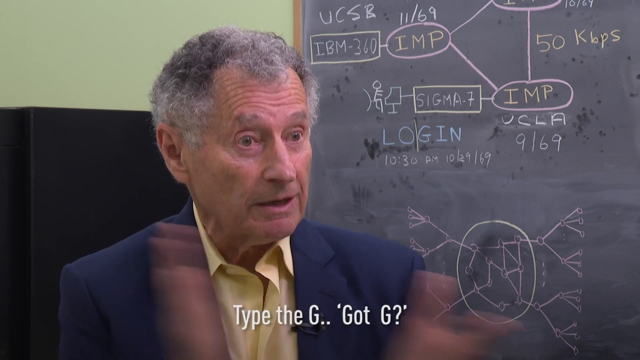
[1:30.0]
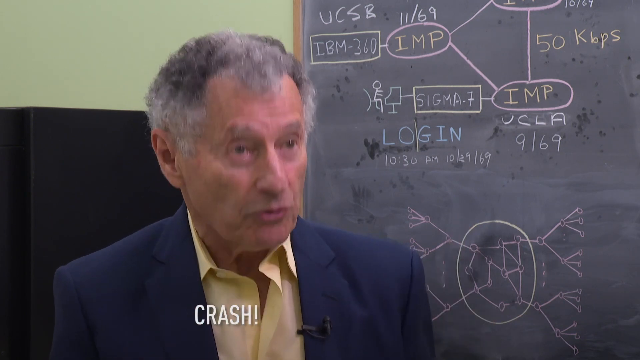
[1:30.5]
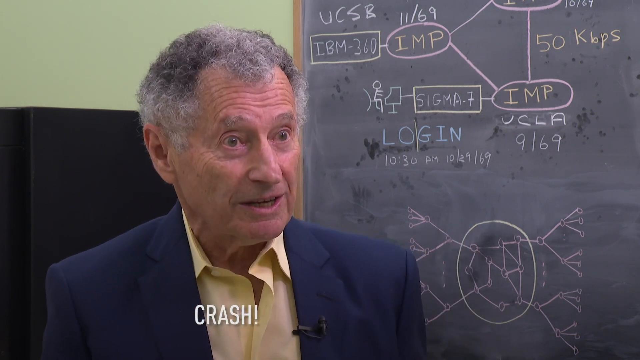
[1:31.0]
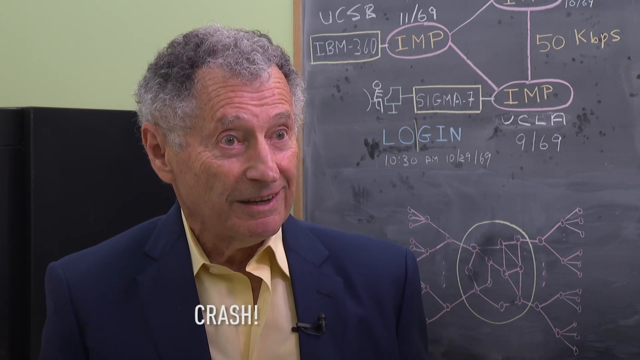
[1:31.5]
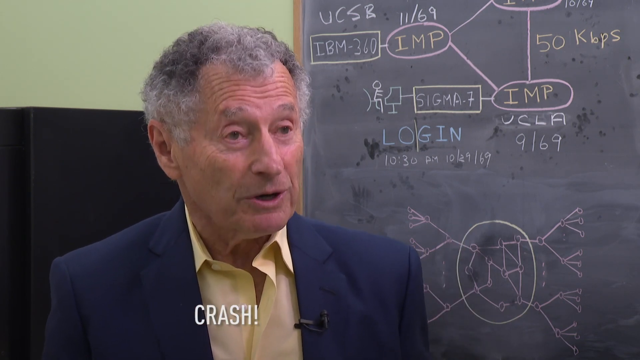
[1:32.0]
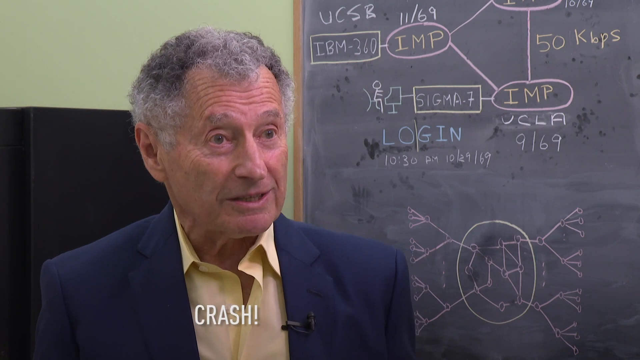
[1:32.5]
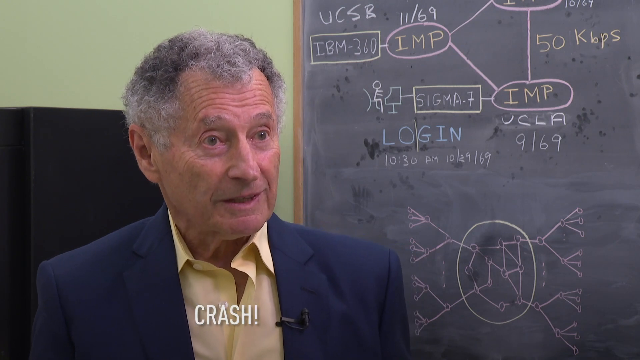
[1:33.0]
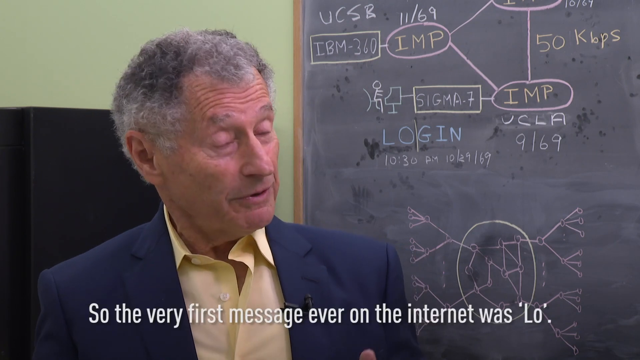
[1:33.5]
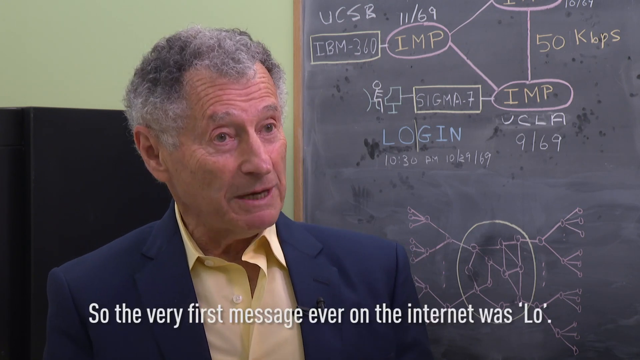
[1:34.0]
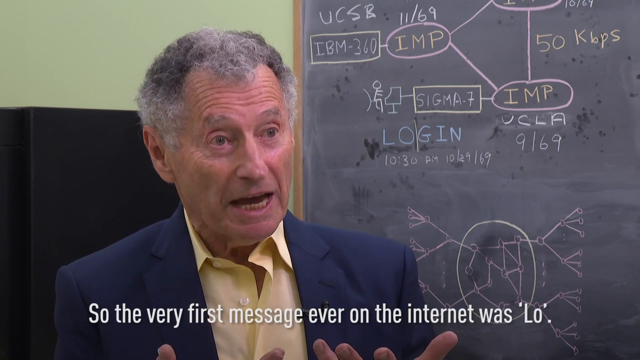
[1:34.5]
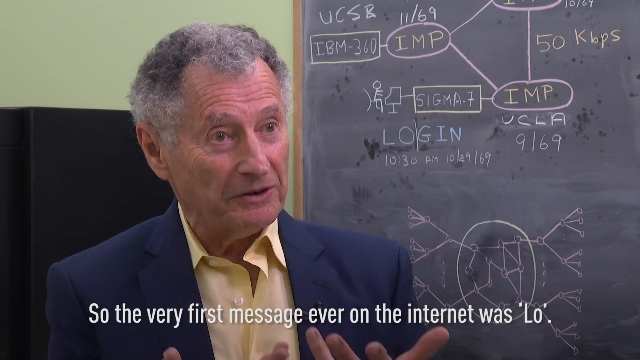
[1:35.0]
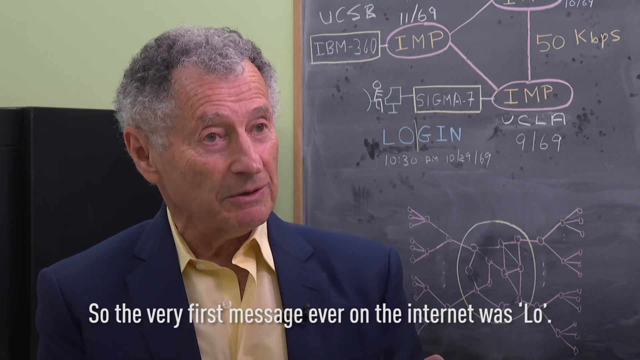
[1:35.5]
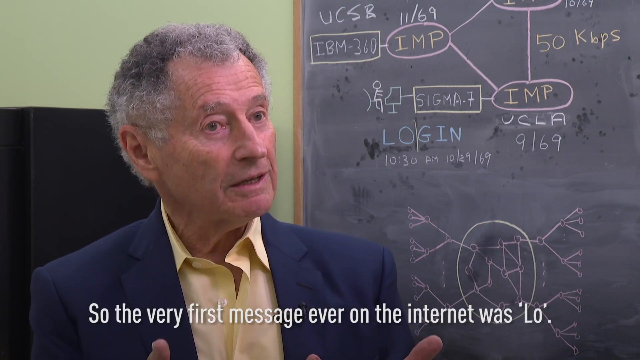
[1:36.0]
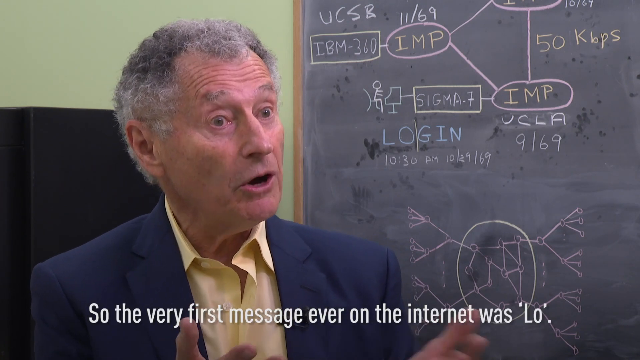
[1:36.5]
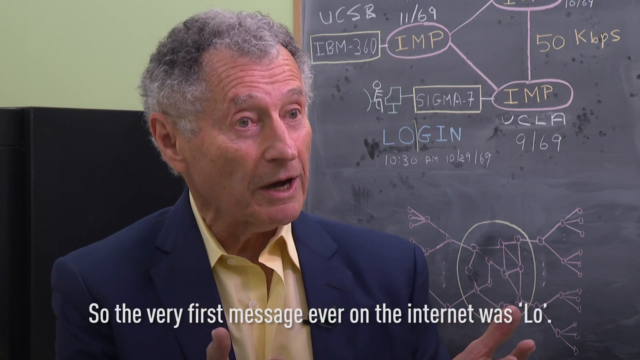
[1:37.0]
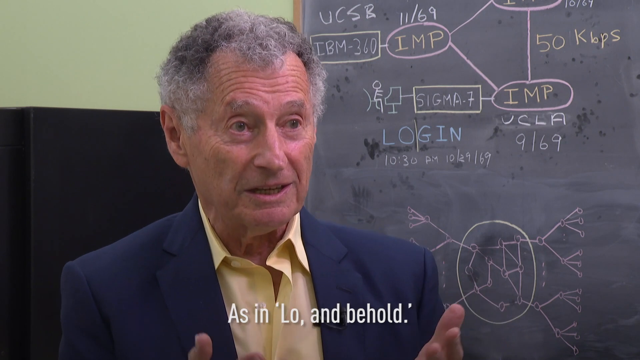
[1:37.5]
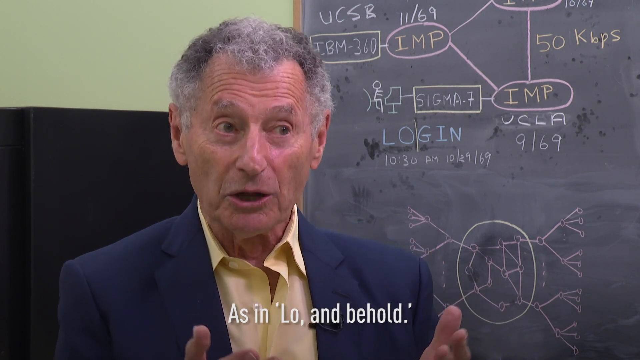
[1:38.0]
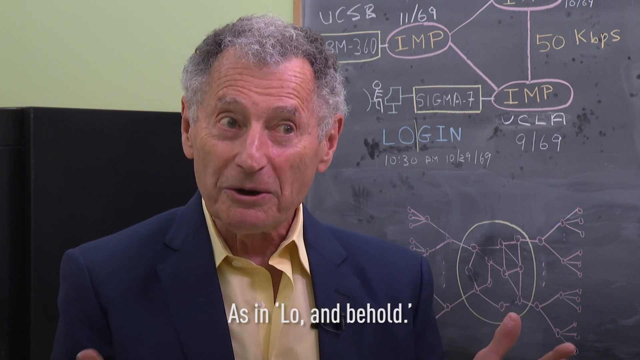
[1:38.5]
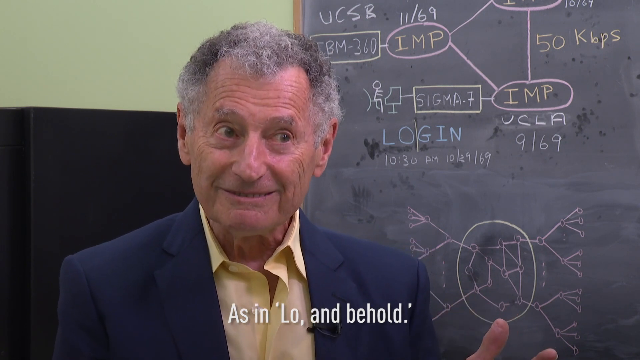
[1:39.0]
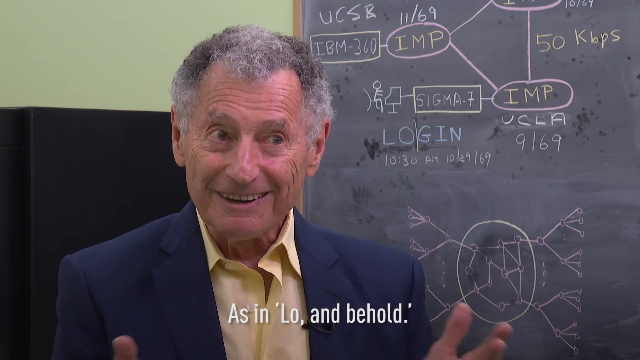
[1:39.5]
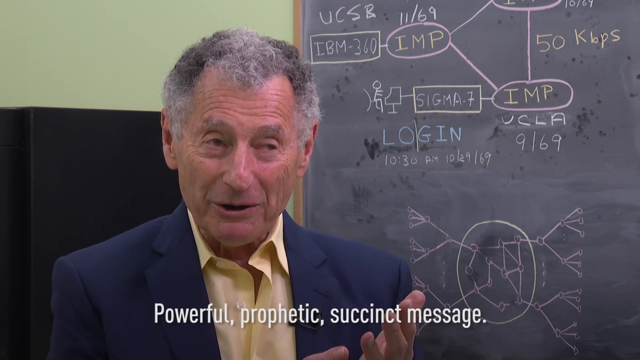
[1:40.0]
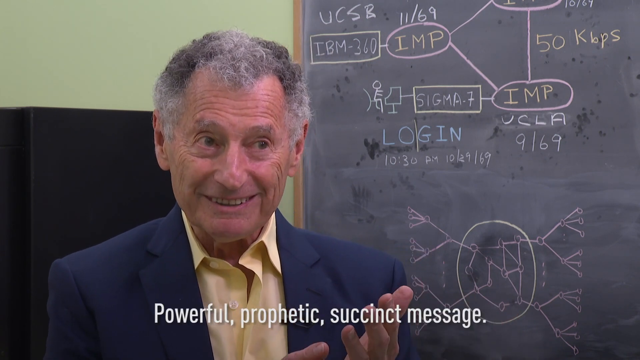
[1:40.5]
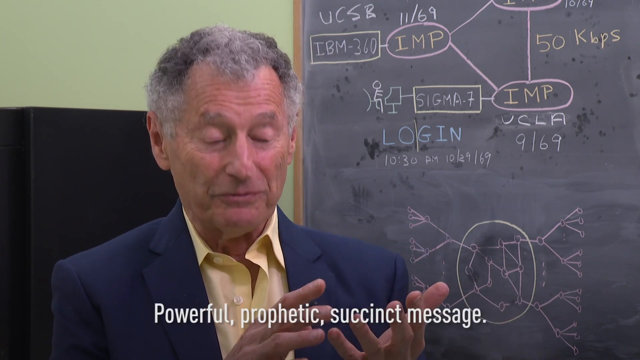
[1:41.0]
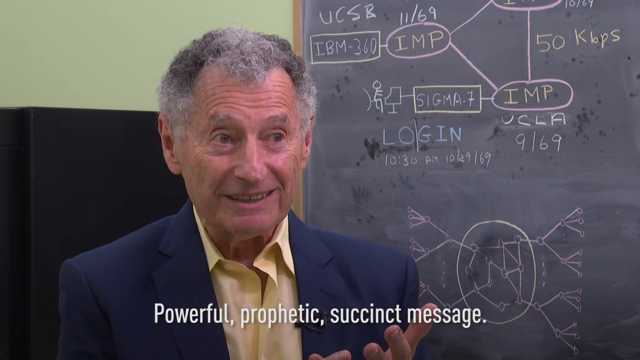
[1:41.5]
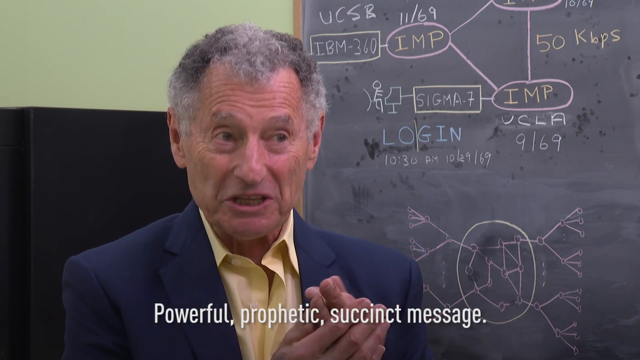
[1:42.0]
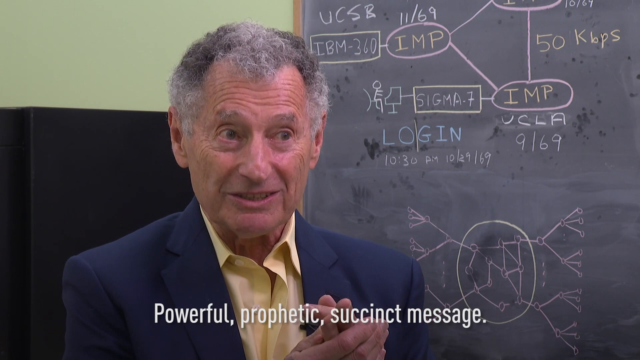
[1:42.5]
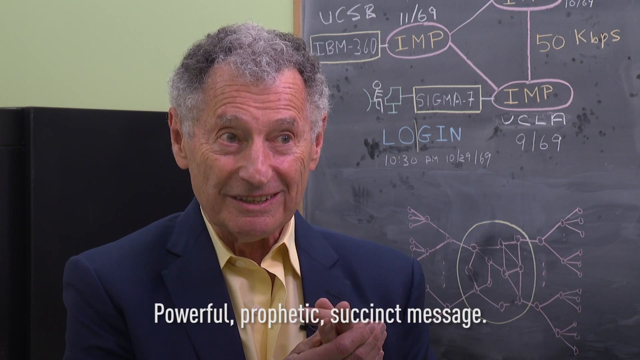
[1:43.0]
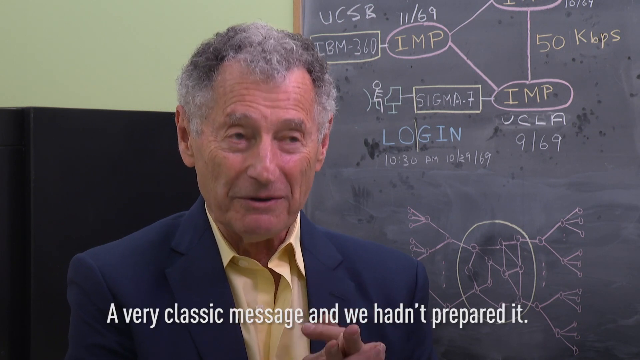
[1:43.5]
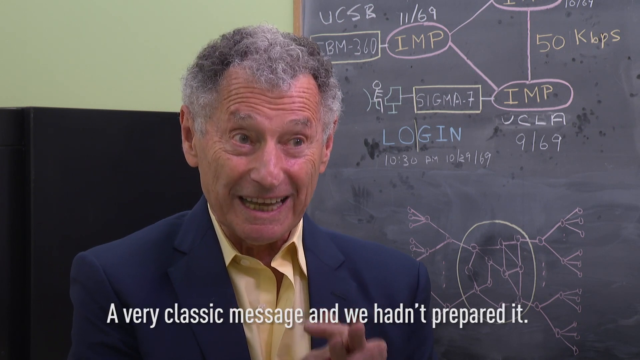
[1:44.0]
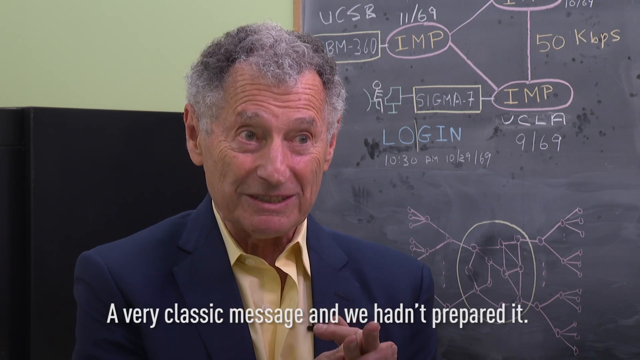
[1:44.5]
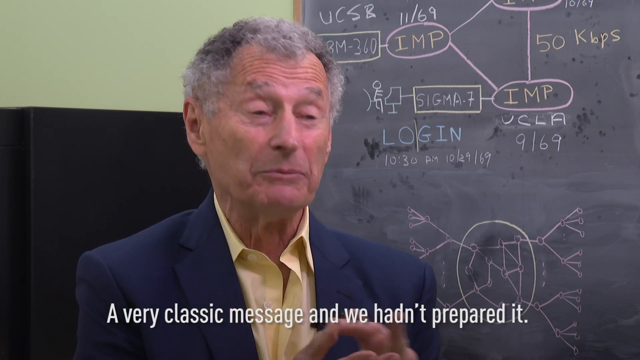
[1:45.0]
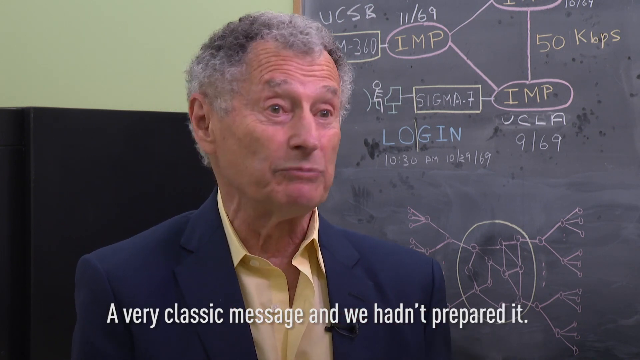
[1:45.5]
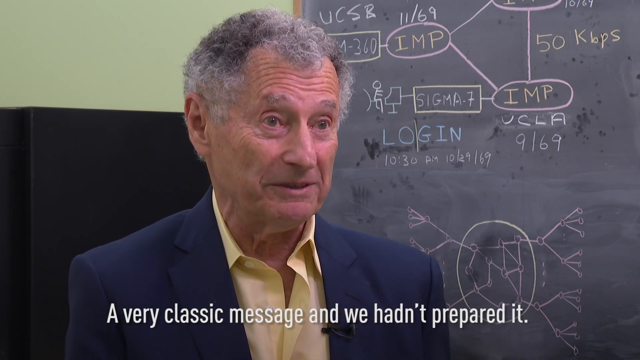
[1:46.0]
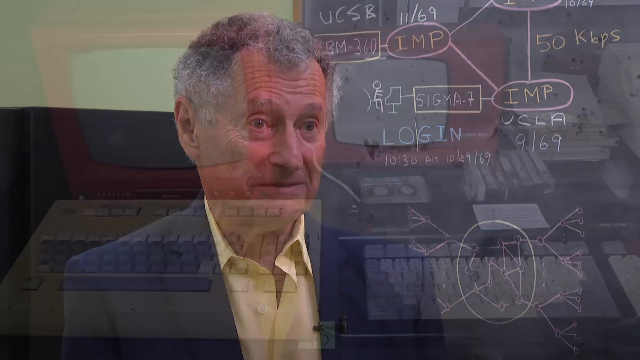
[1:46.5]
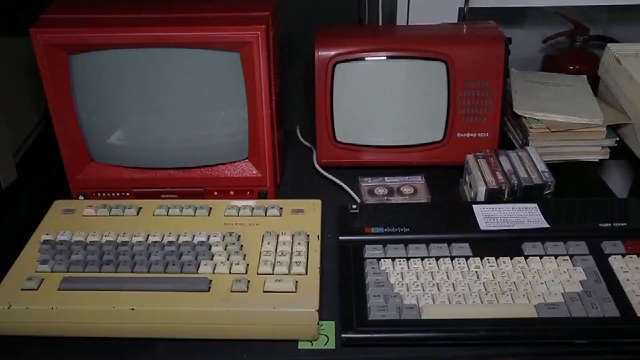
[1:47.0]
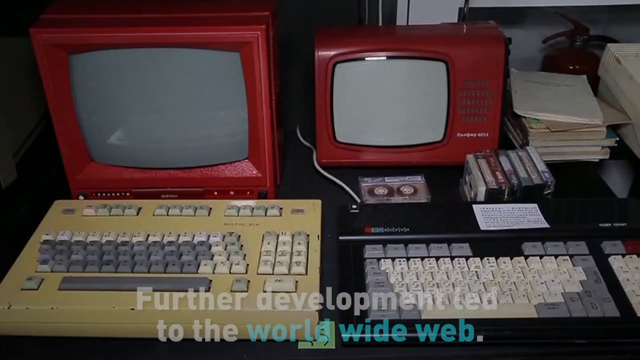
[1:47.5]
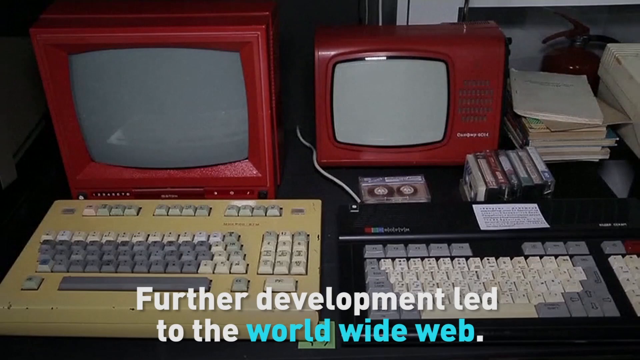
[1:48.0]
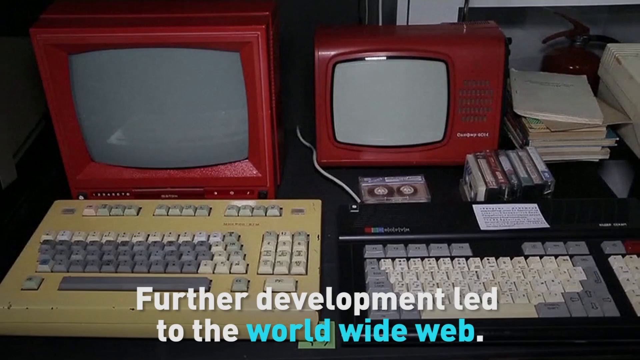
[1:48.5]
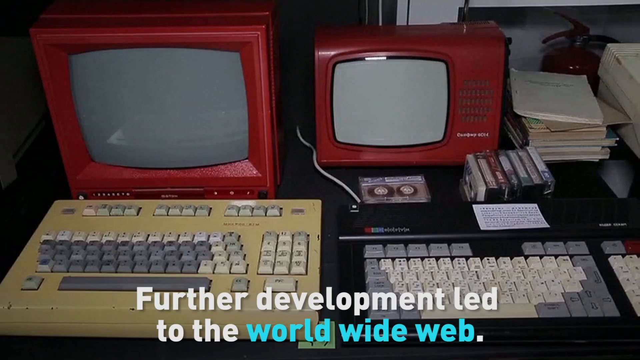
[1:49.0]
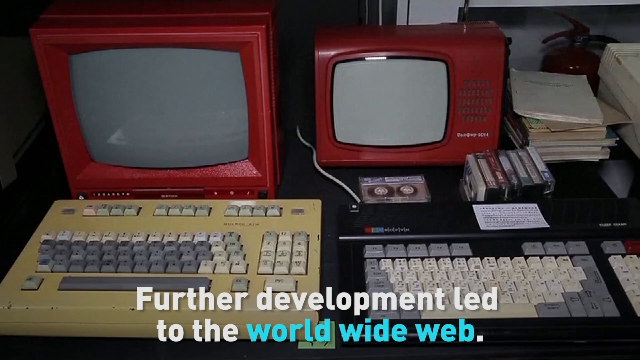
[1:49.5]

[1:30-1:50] A man with short grey hair, sitting or standing in front of a chalkboard, speaks to someone off camera as captions appear at the bottom of the screen. They read "Type the G. . 'Got G?" Crash!" and he claps his hands together. The captions change to "So the very first message ever on the internet was 'Lo.'" and then to "As in low and behold," as he smiles. The text changes to "Powerful, prophetic, succinct message" while he taps the fingers of one hand against the fingers of the other, as if counting off items on a list. Then the caption reads, "A very classic message, and we hadn't prepared it." The scene switches to a close-up of what looks like two very old computers that both look like red televisions, each with a very large keyboard in front of it. The keyboard on the left is yellow and the one on the right is black, with grey and white keys. To the right of one of the computer screens, there is a stack of books on a desk.